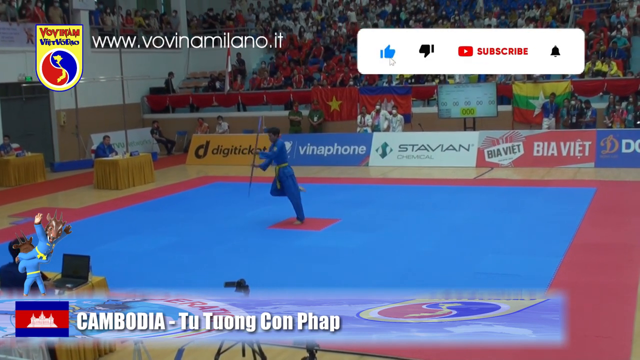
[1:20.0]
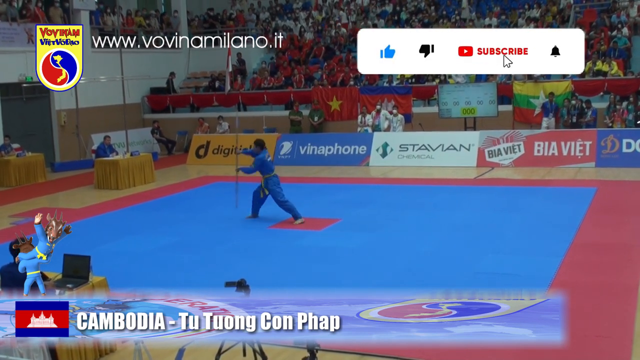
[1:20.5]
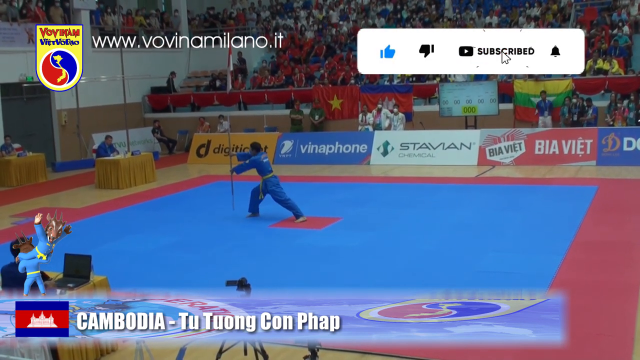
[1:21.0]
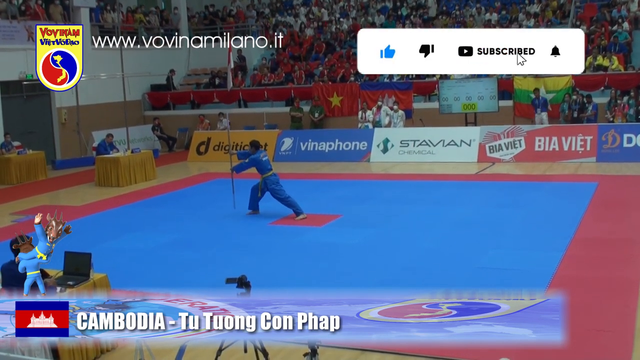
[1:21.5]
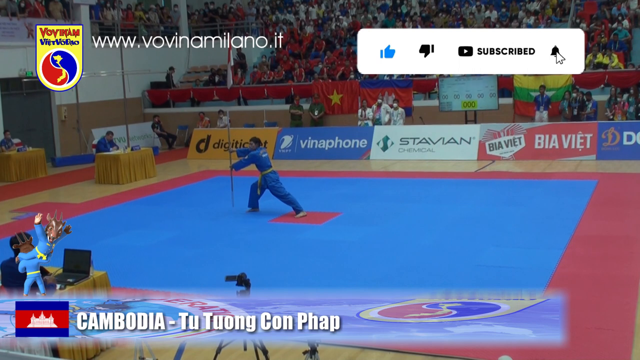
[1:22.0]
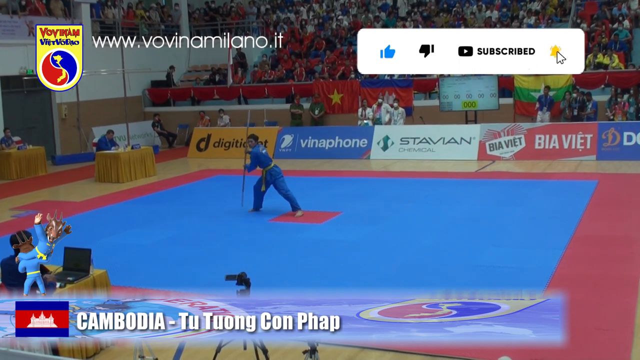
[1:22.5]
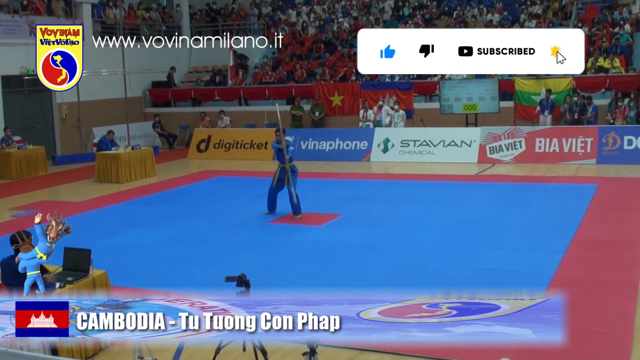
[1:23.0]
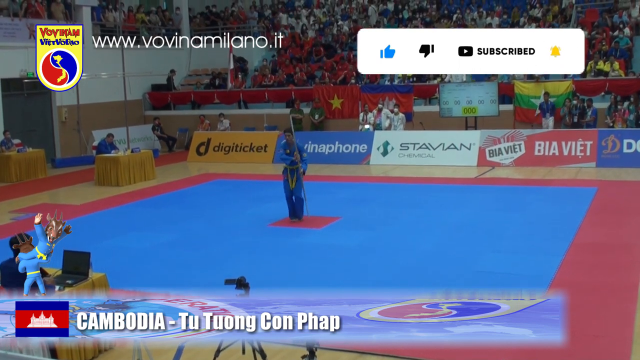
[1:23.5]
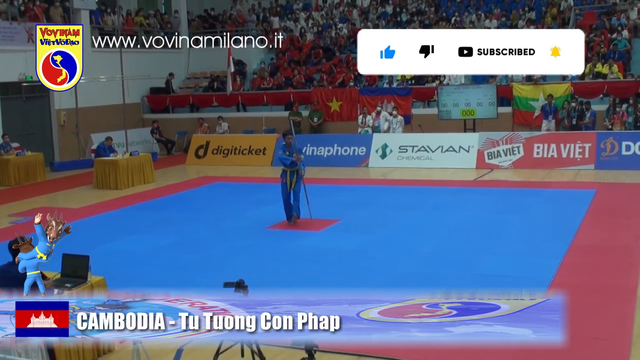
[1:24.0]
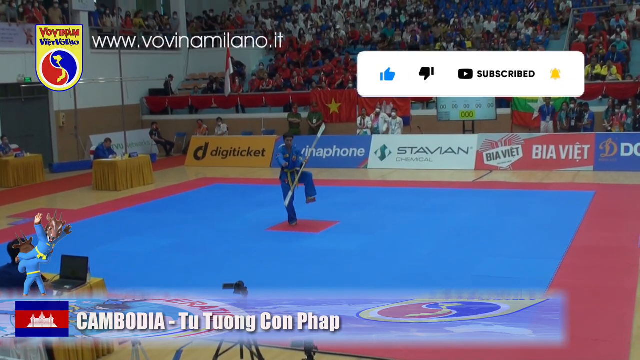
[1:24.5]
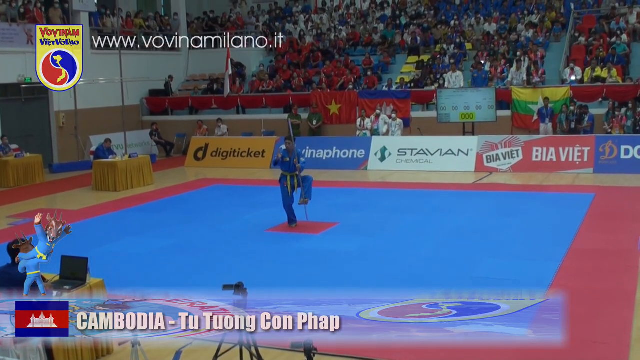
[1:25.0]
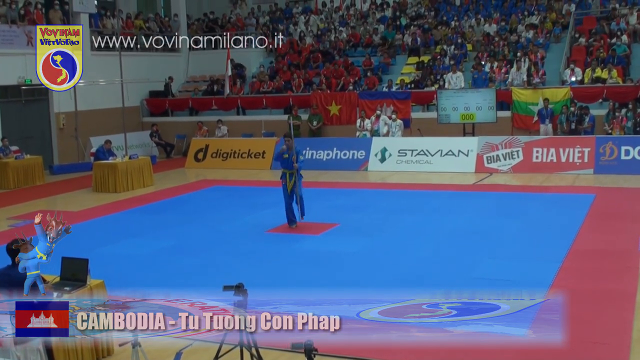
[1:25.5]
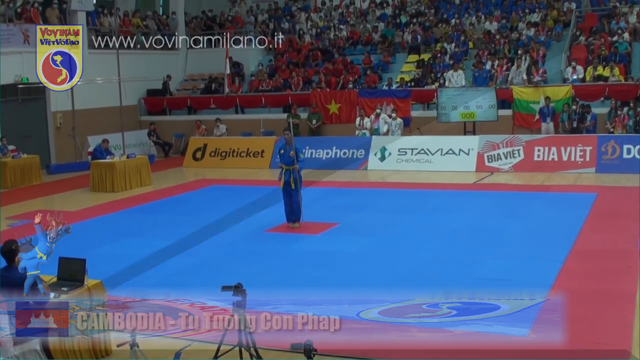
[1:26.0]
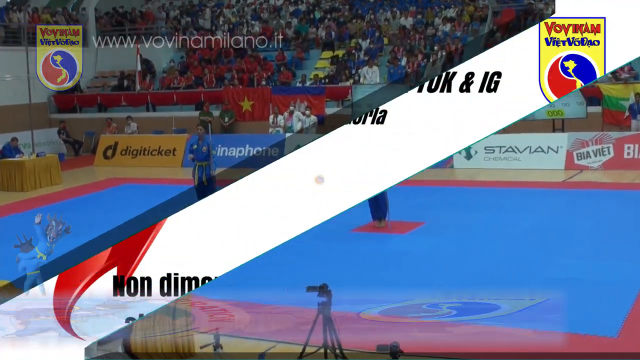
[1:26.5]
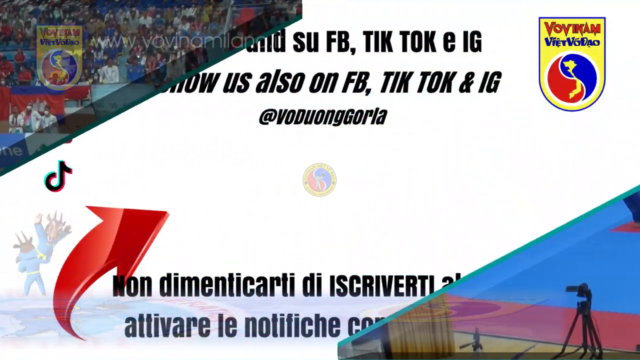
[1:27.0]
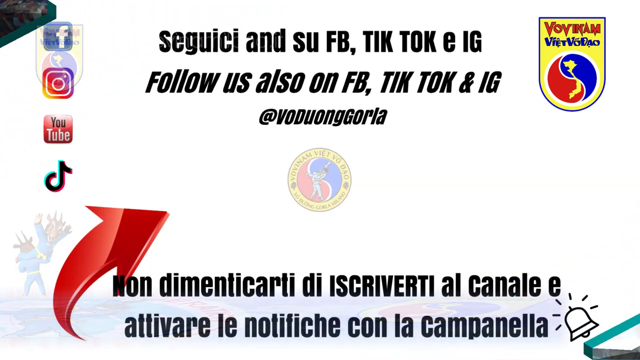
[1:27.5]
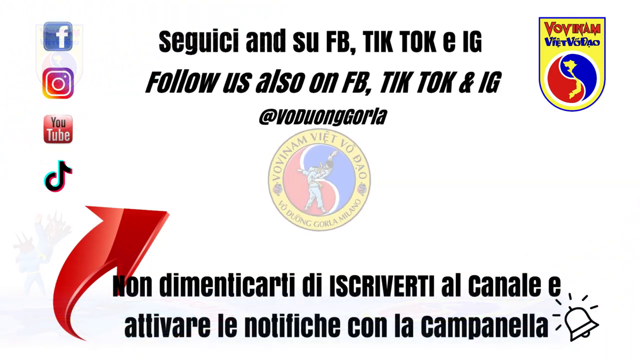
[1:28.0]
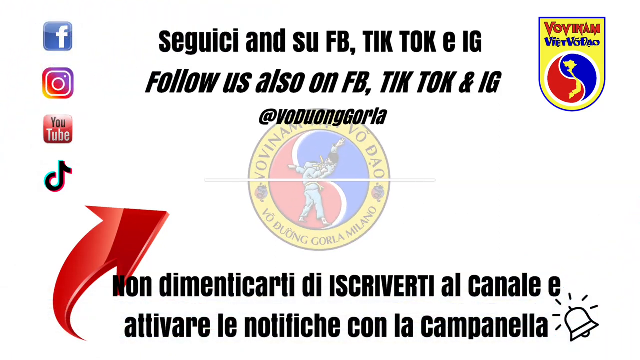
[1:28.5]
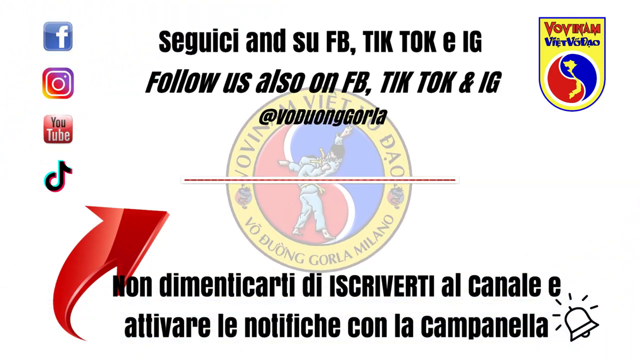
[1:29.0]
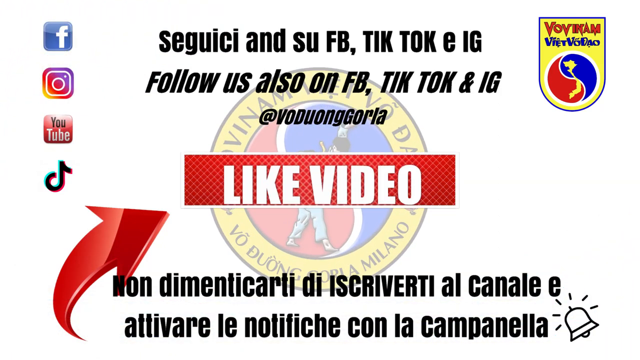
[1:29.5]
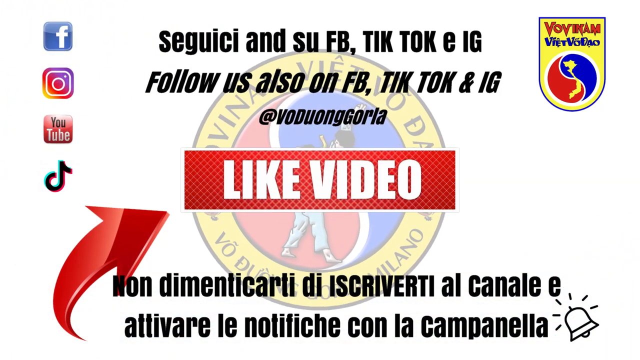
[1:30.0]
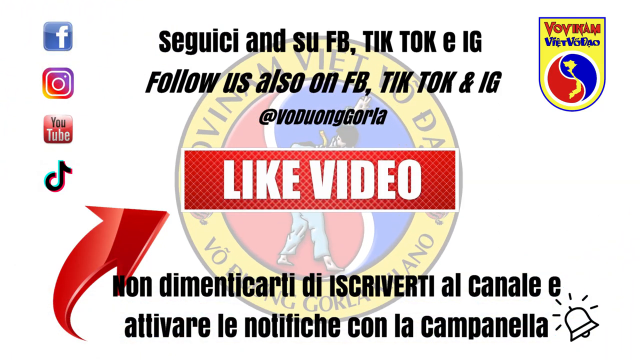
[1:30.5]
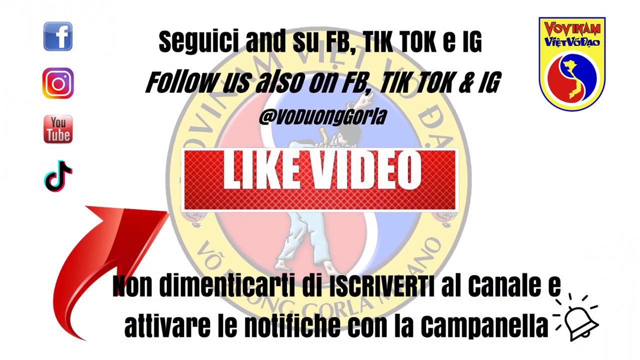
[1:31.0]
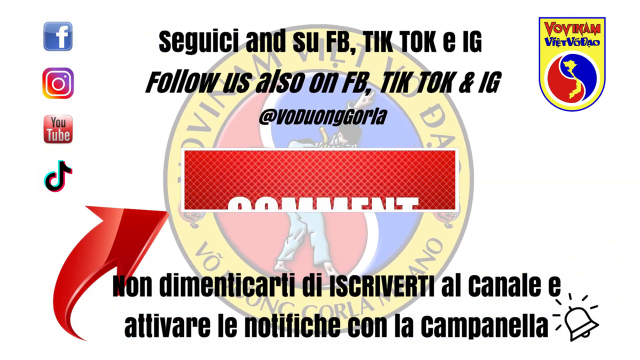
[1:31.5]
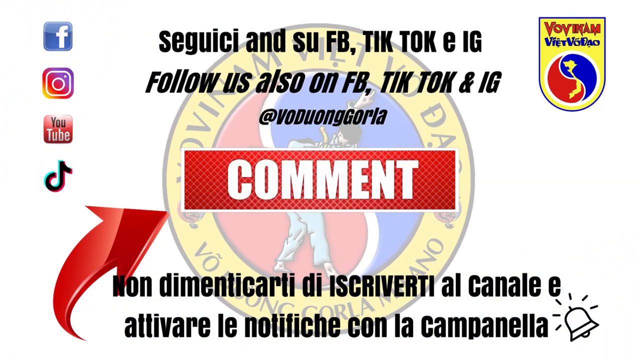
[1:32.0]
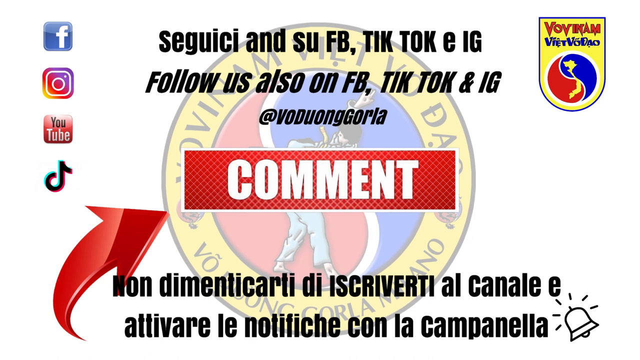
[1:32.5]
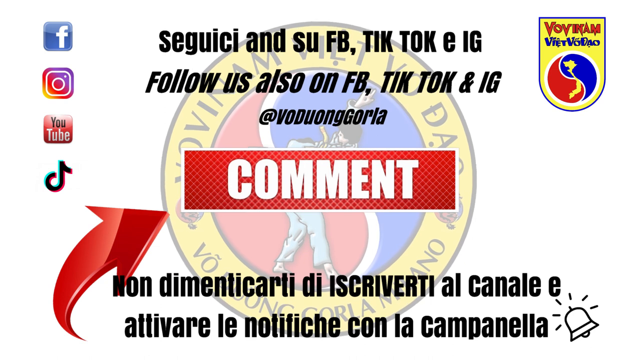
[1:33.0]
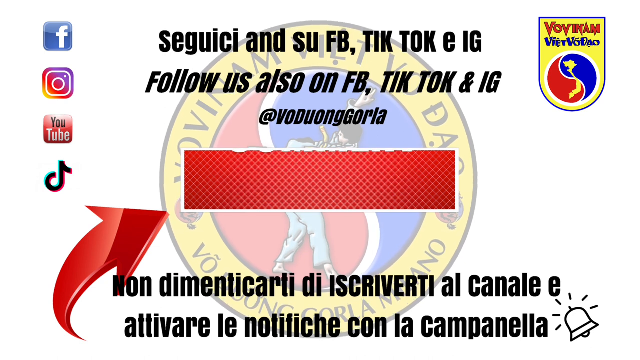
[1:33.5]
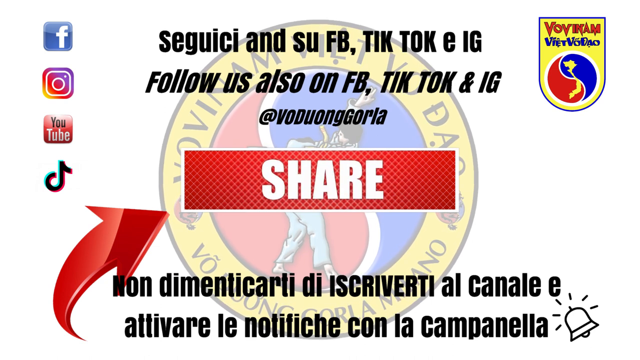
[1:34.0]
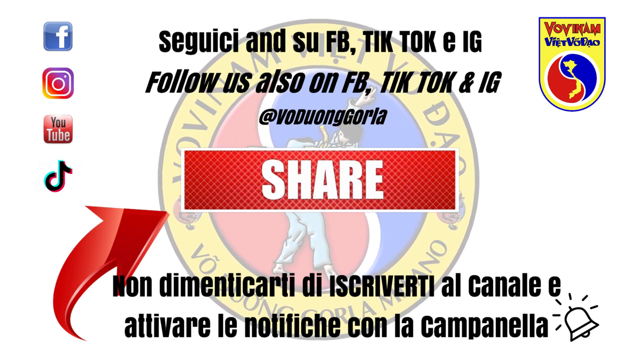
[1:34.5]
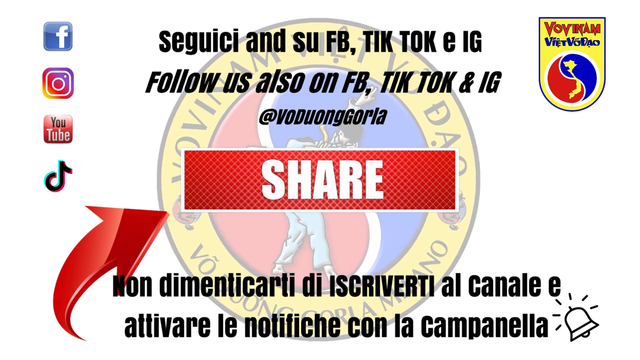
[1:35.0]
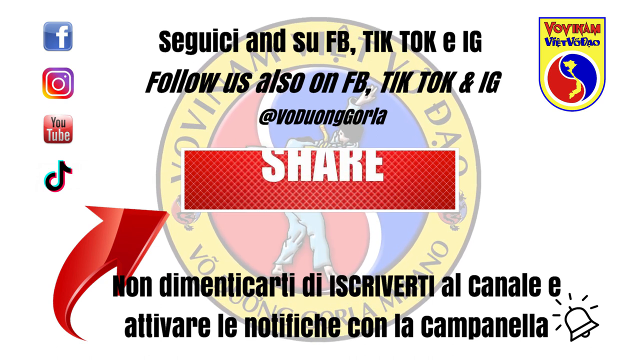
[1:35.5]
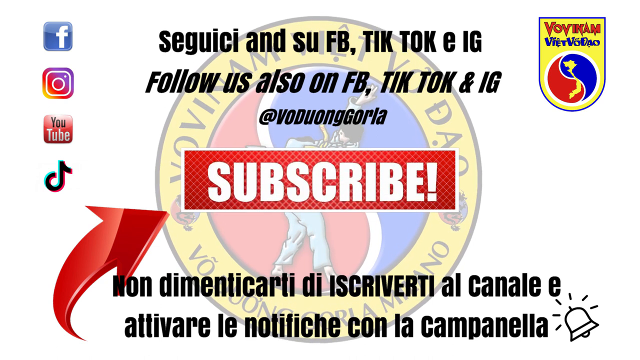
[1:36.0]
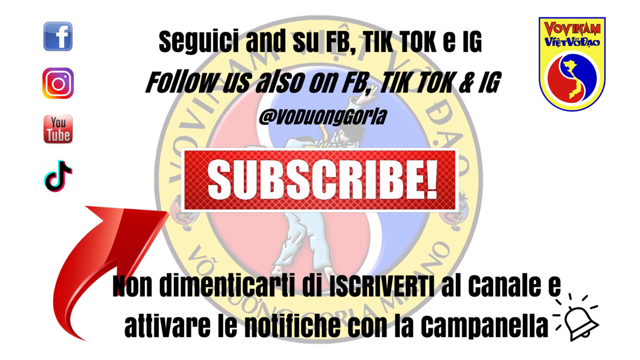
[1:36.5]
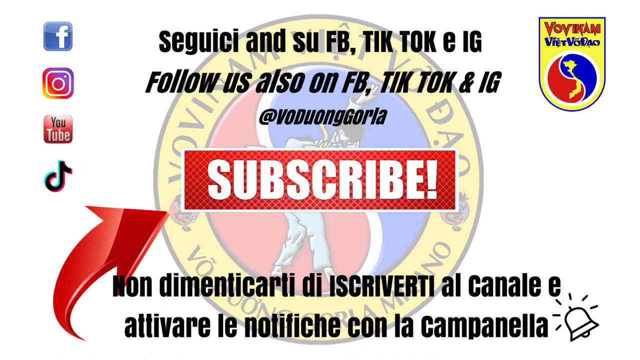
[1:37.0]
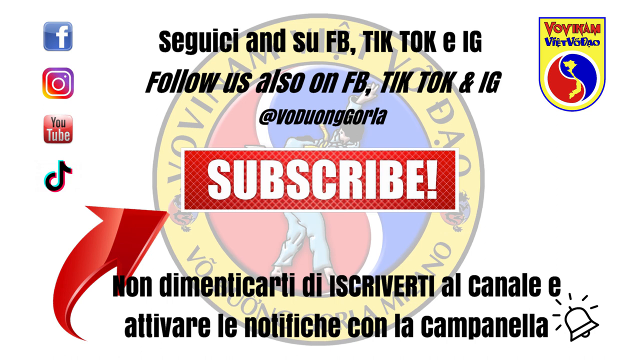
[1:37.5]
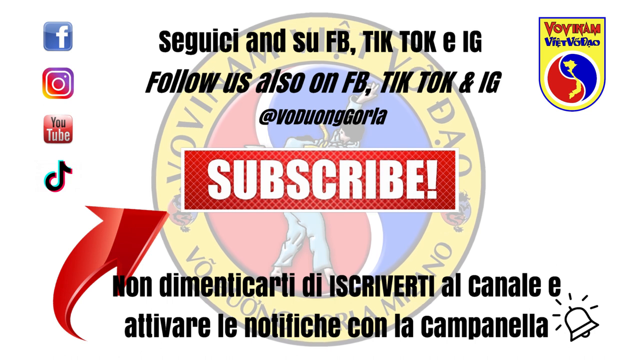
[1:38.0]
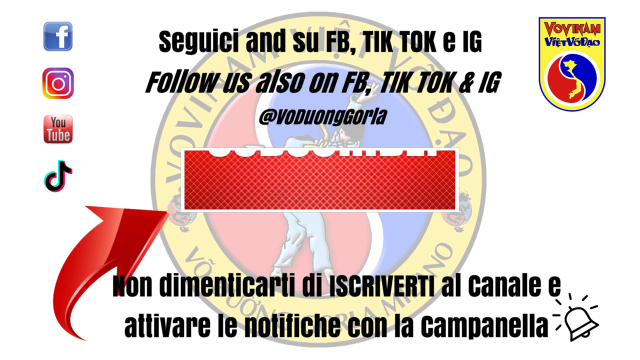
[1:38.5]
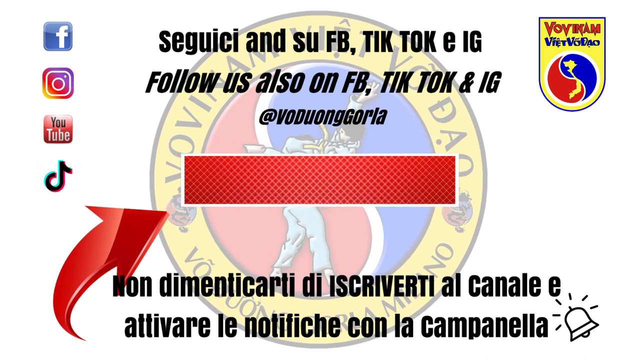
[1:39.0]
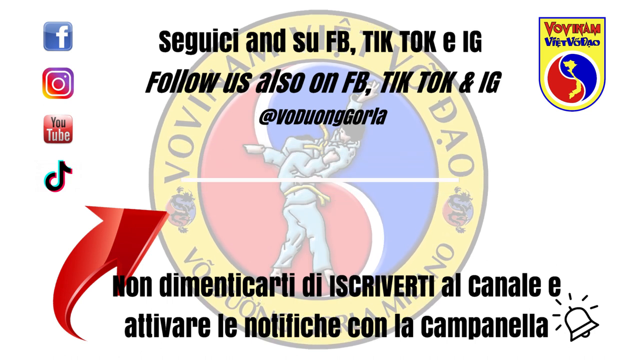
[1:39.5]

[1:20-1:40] In the sports arena, an audience is in the background and company banners surround the main floor. The floor is square, blue with an orange outline and an orange square in the center. A man with black hair, wearing a blue shirt and pants, stands on the orange square holding a long spear or sword. He twirls the sword in various moves and dances around the arena, facing different directions, entertaining the audience. The screen then fades to a new screen with some written information on it, a circular emblem in the center, some computer icons, and a large red arrow in the bottom left corner. The logo in the center becomes large but is faded in the background. A triangular orange banner appears in the center with the words "LIKE VIDEO" in white, which fades to the word "COMMENT," which then fades to the word "SUBSCRIBE." The orange banner disappears, and the screen goes back to the arena scene.